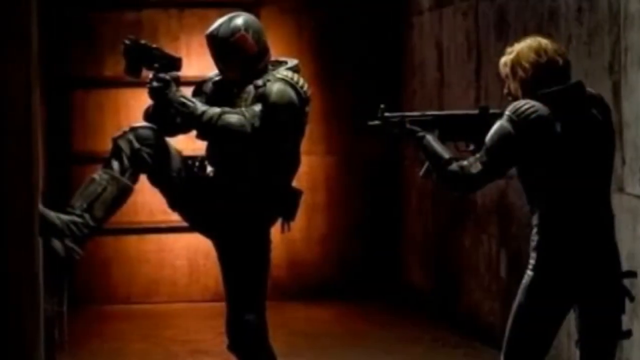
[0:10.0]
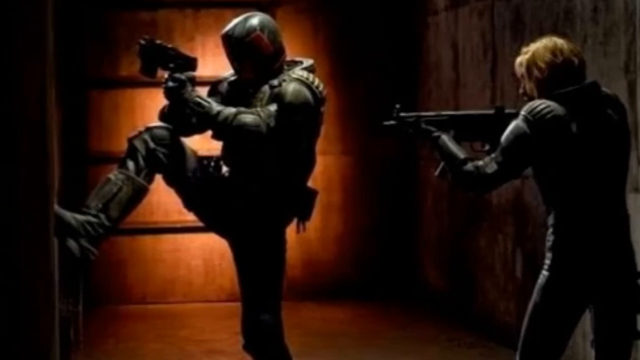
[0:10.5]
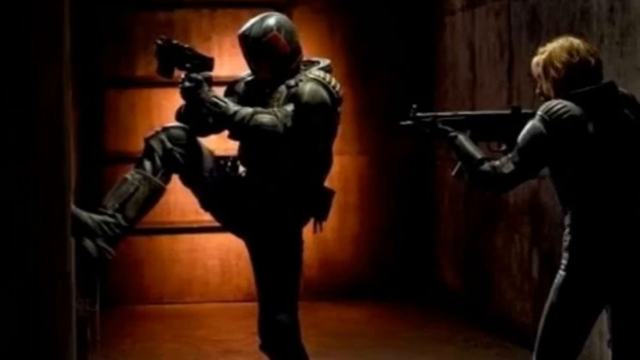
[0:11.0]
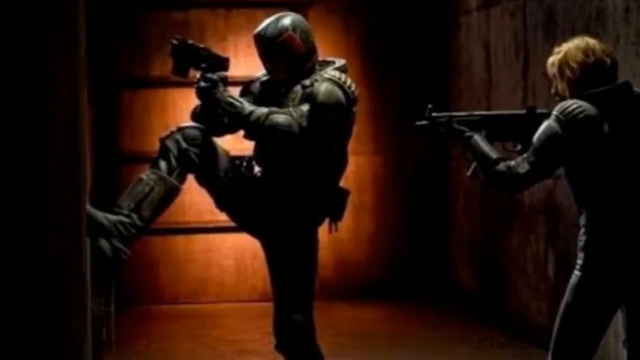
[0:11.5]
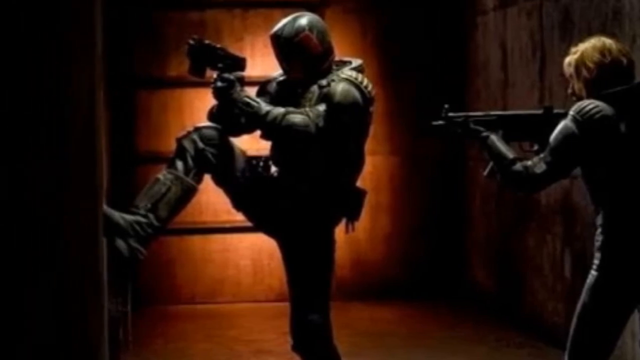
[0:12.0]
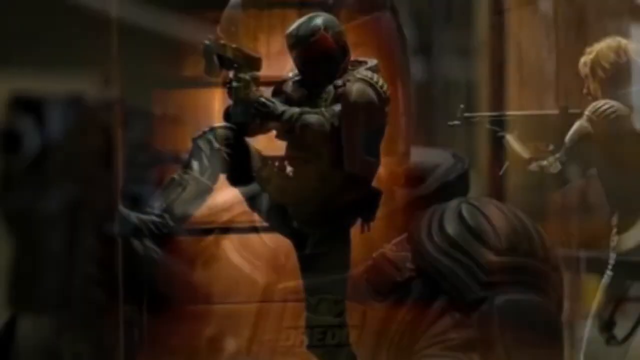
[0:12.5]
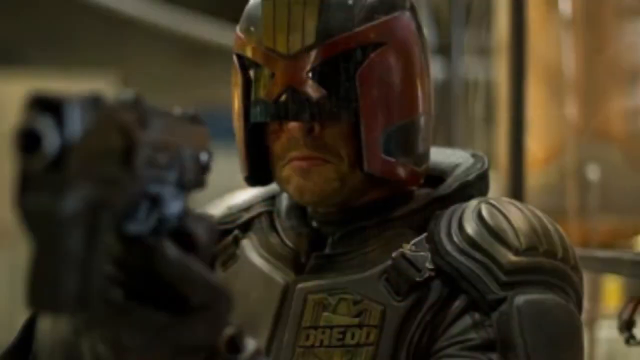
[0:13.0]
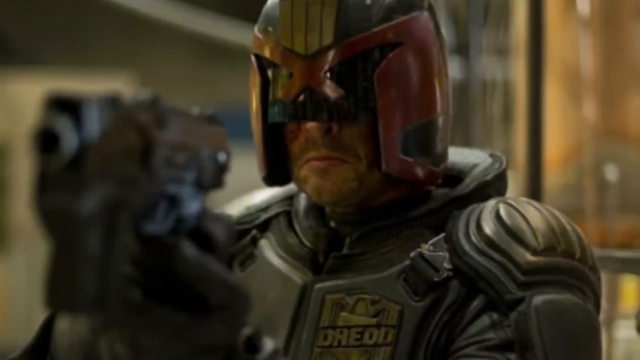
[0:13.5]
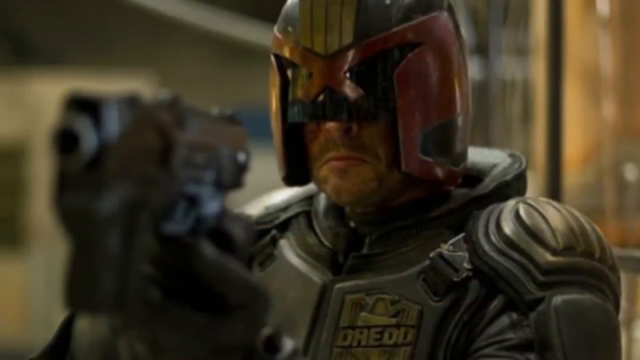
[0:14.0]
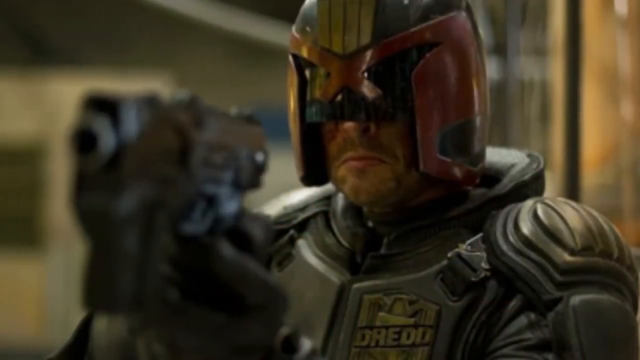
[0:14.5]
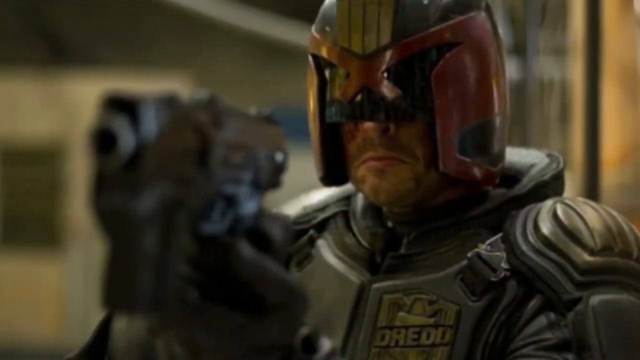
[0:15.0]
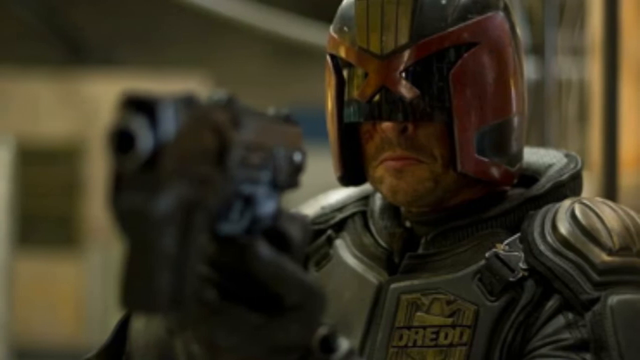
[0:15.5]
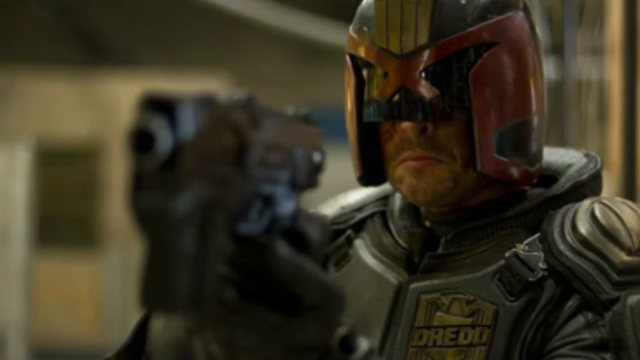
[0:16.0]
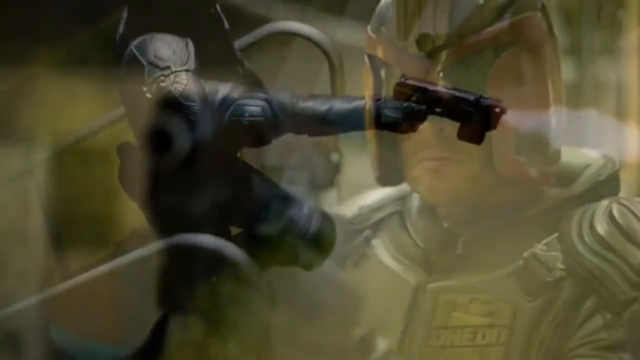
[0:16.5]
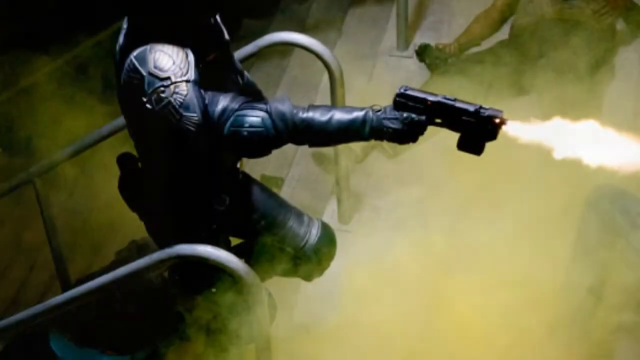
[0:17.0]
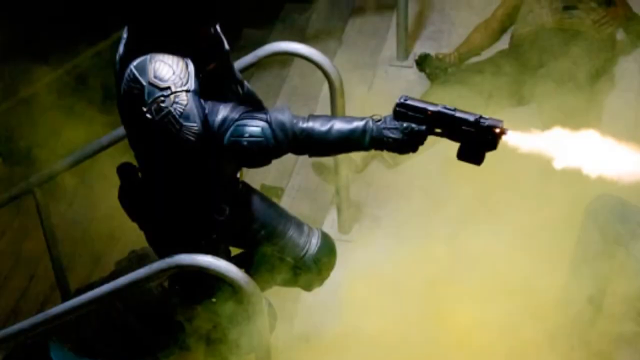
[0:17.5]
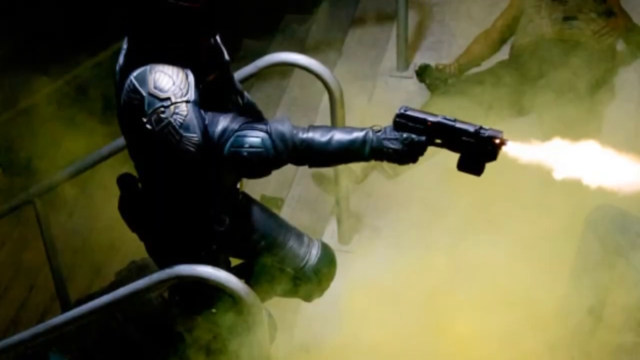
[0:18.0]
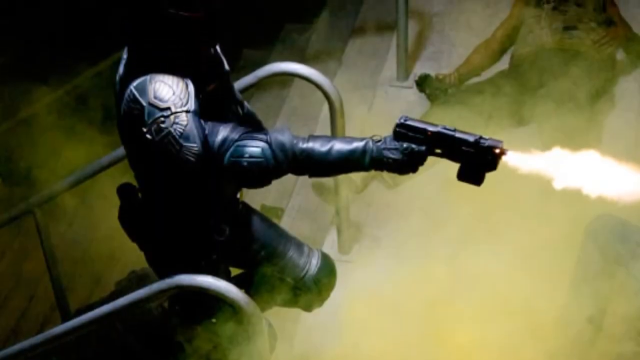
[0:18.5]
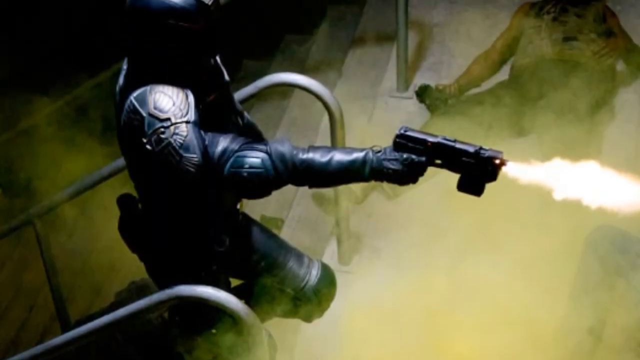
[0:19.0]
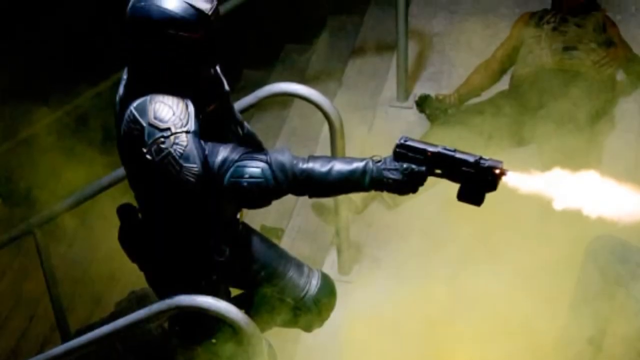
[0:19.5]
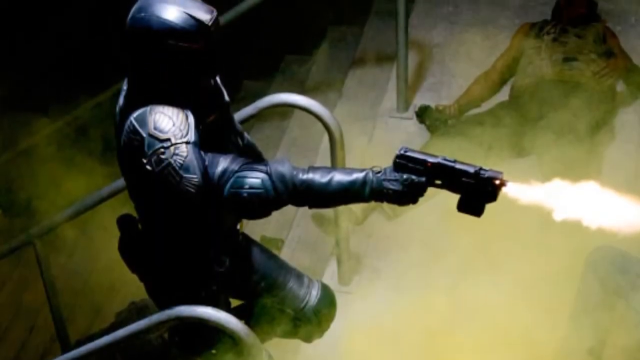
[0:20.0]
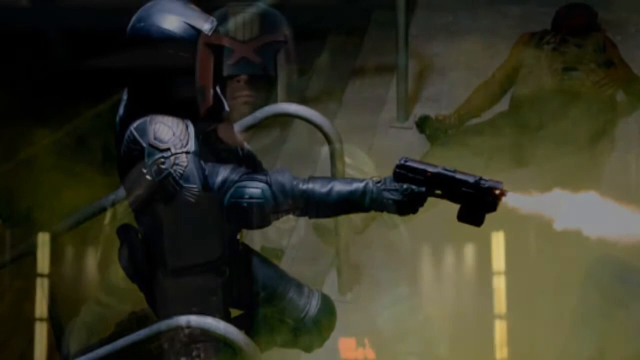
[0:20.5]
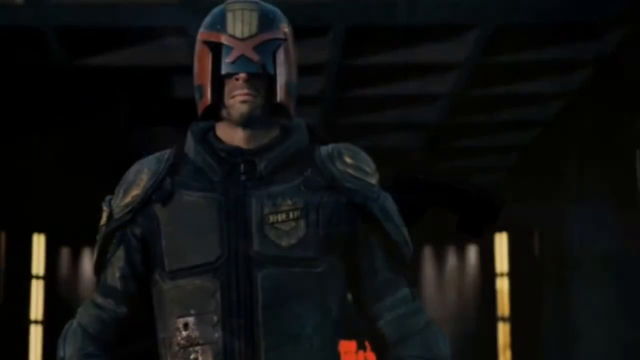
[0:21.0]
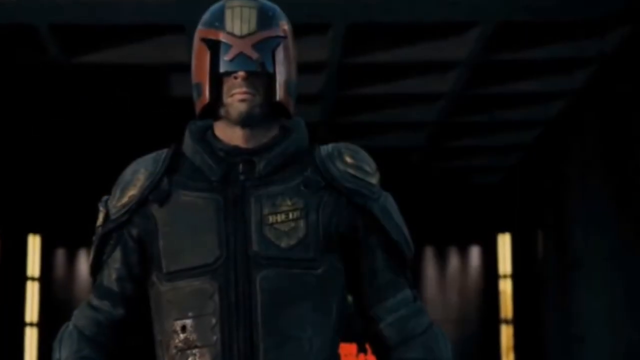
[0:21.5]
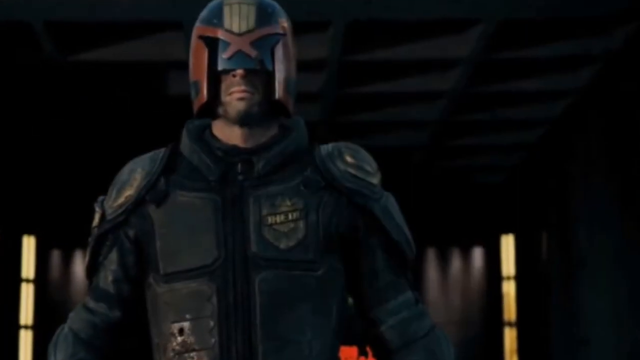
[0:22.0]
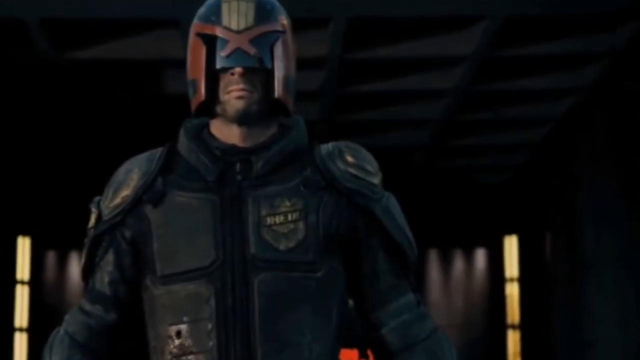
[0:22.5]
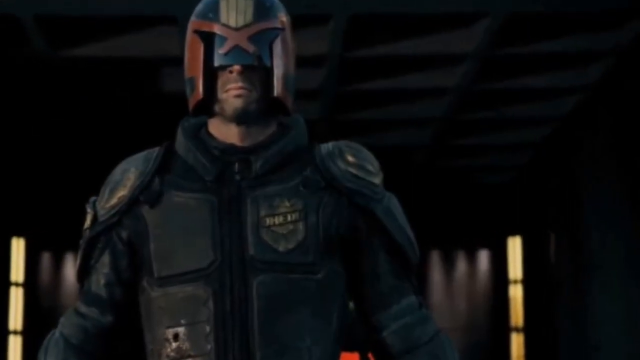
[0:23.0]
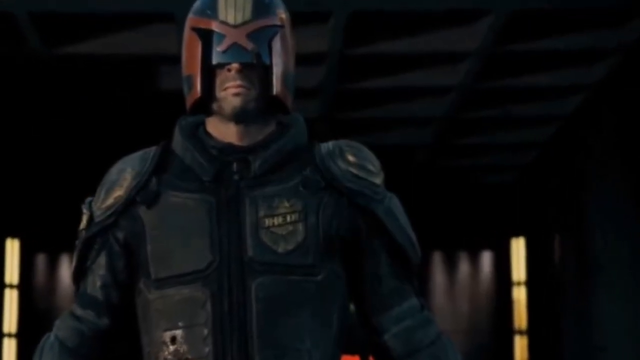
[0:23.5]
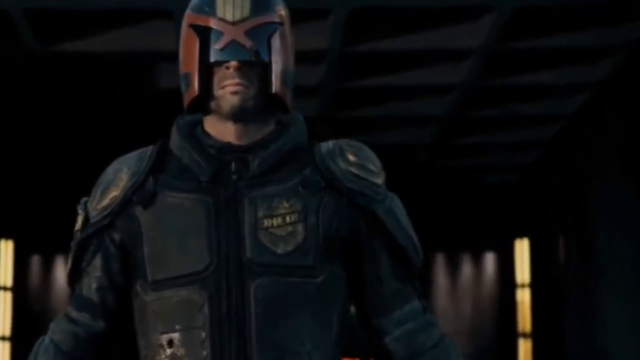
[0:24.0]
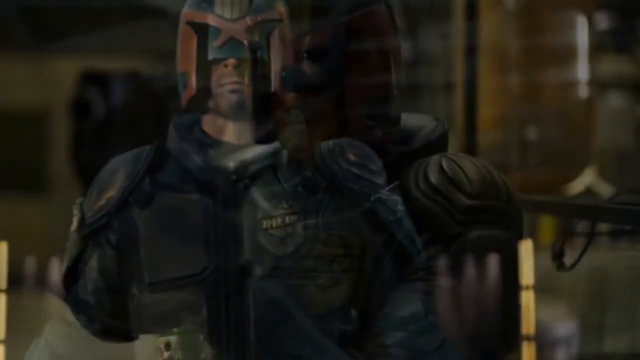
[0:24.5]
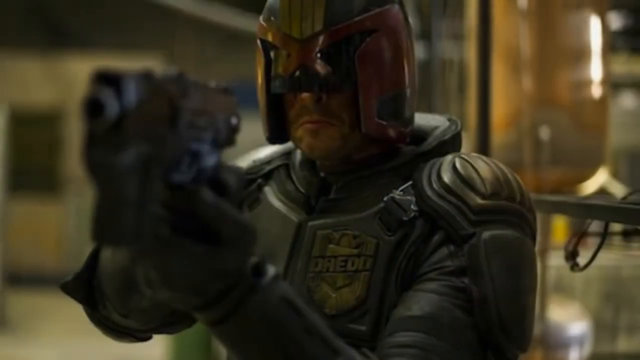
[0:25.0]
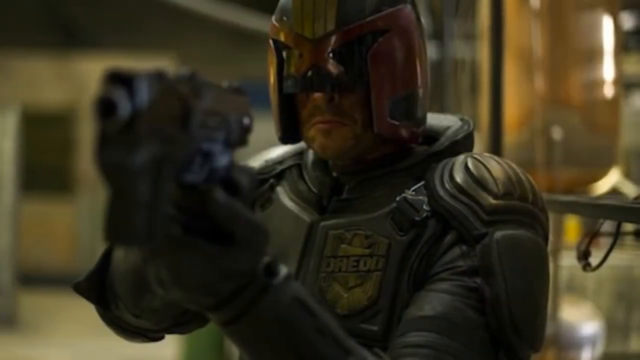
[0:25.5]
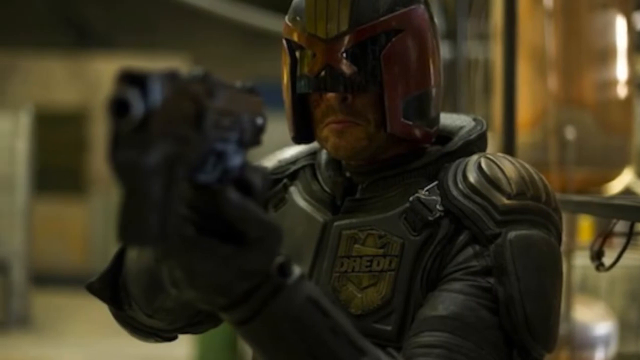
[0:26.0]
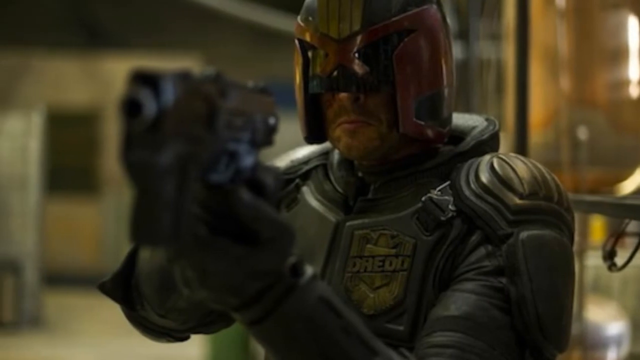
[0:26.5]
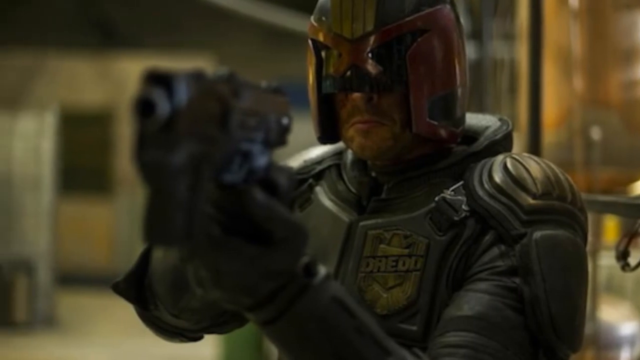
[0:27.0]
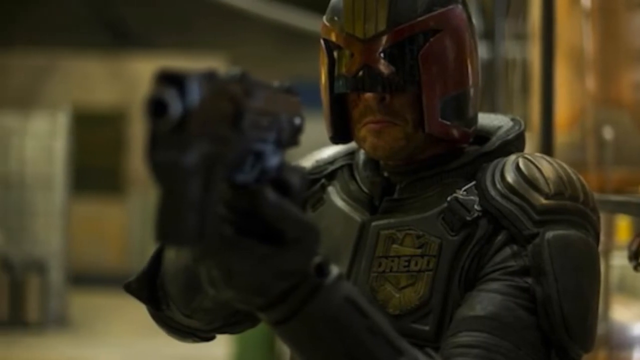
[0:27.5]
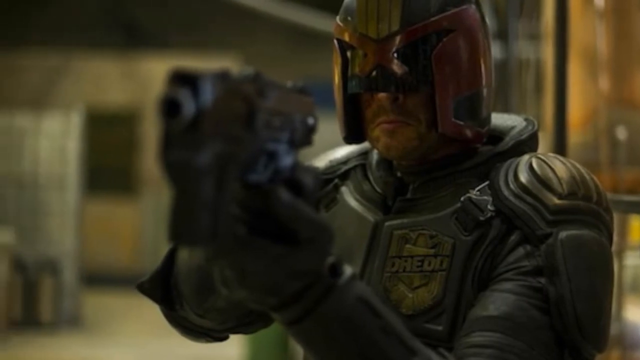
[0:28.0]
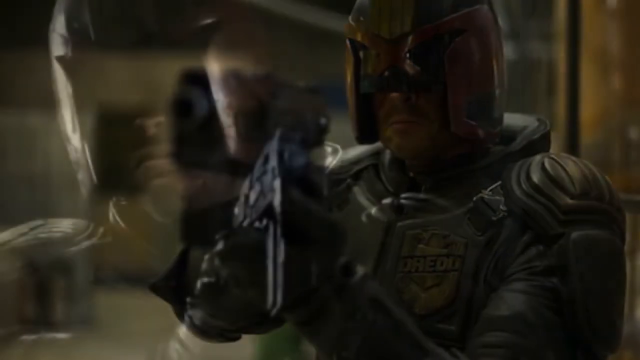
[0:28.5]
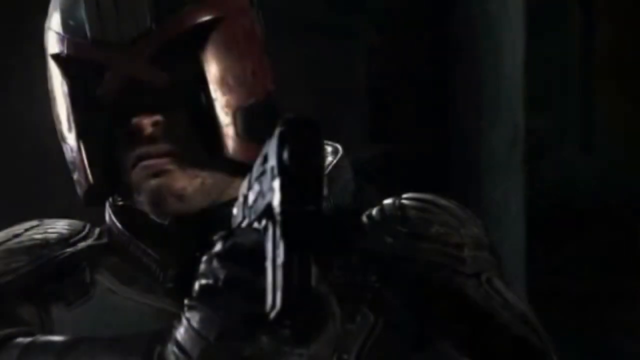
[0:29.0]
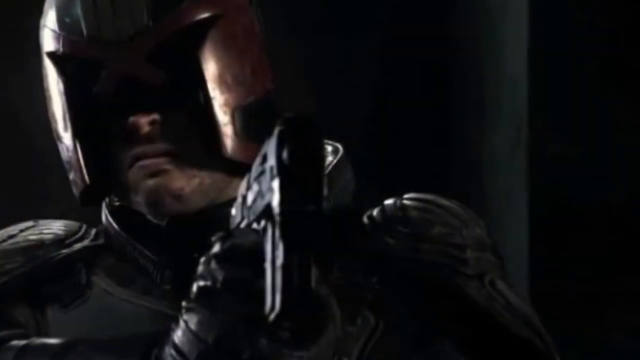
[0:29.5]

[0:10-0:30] Still images continue, showing the man holding a gun while another man behind him follows him. The pictures appear to show how the movie was shot. The man holds a pistol and fires it, with fire coming out of the gun, and they head into a smoky area. Another image shows him in a helmet that covers his ears and eyes, leaving only his mouth visible, and he has a gun. It is either a movie or a game, and he wears his character's costume. The guns fire shots of fire.